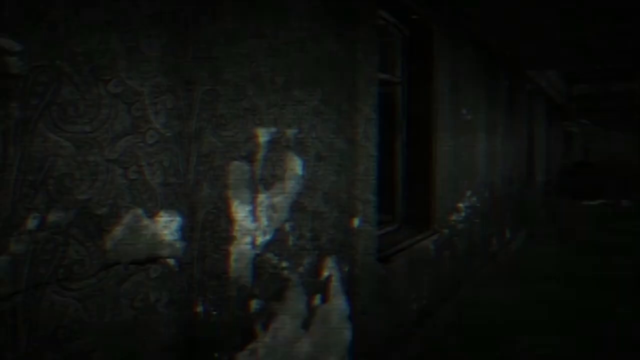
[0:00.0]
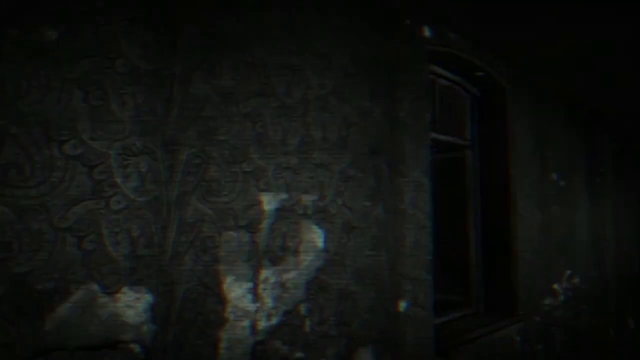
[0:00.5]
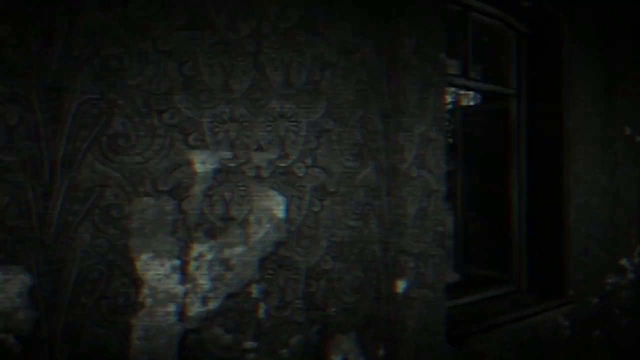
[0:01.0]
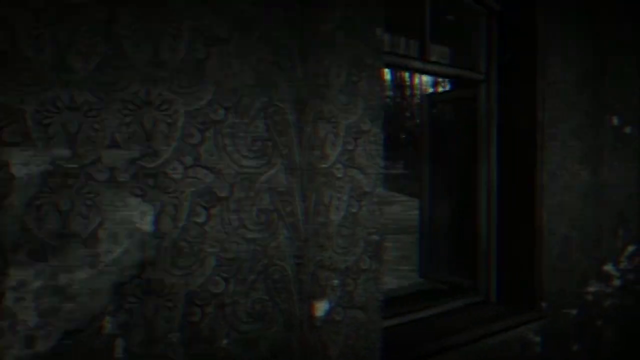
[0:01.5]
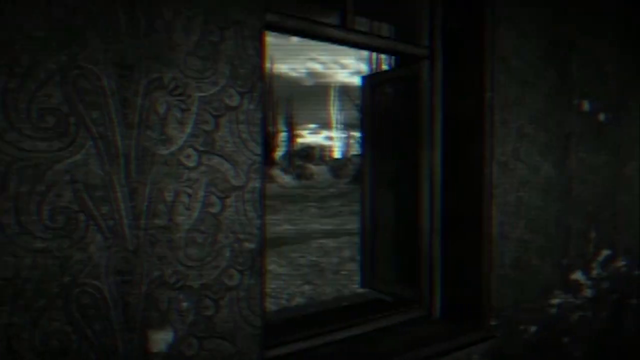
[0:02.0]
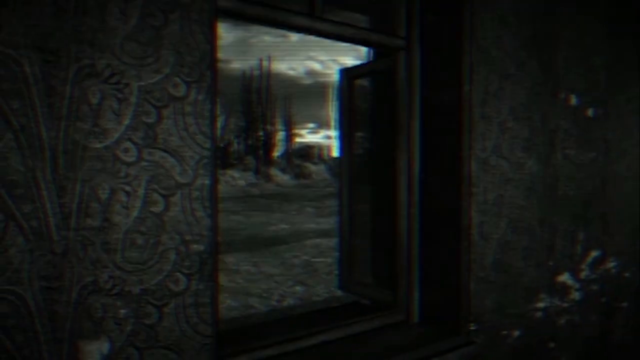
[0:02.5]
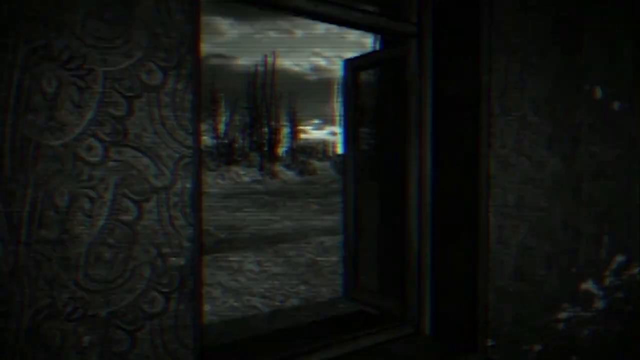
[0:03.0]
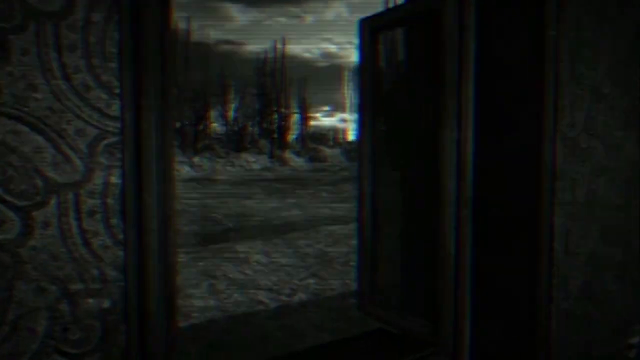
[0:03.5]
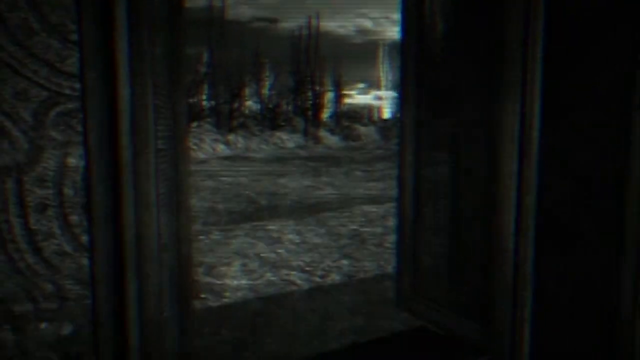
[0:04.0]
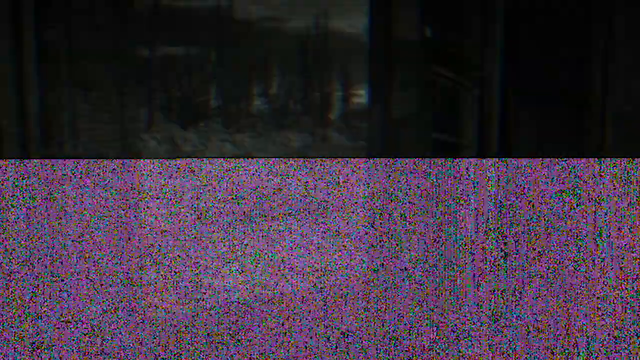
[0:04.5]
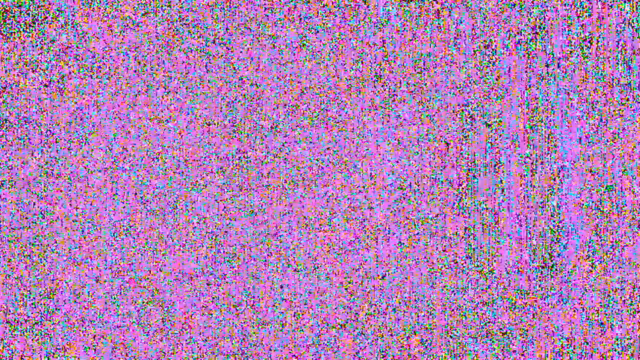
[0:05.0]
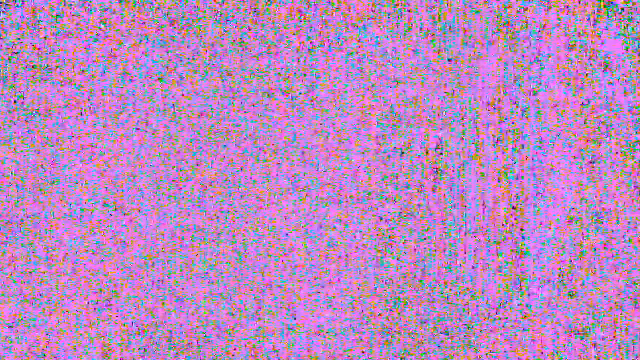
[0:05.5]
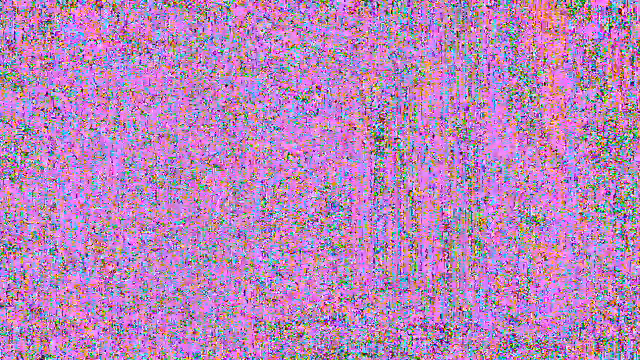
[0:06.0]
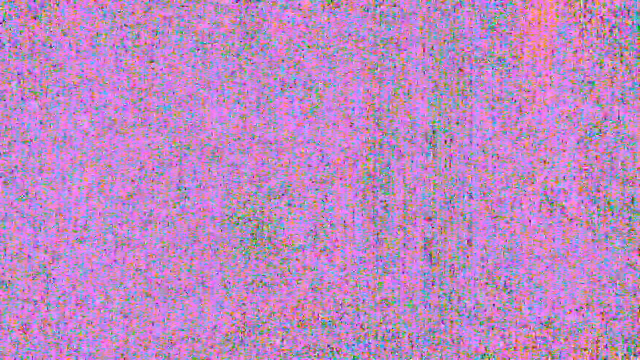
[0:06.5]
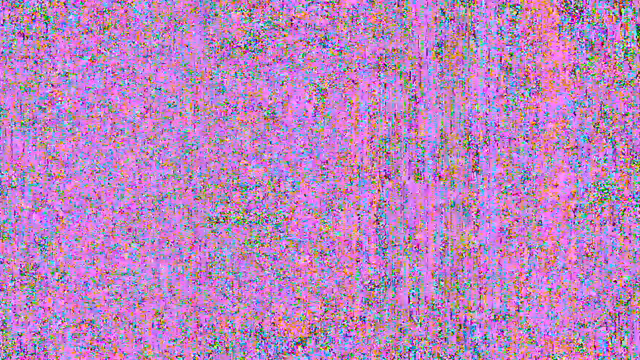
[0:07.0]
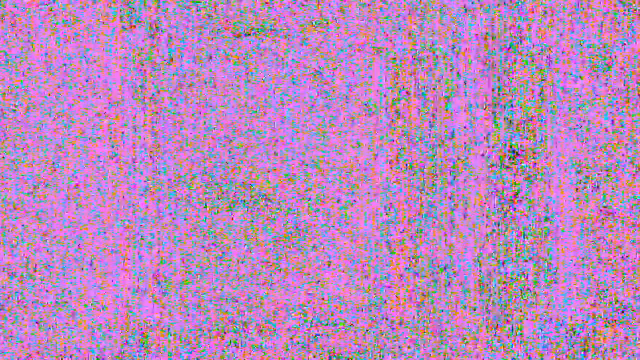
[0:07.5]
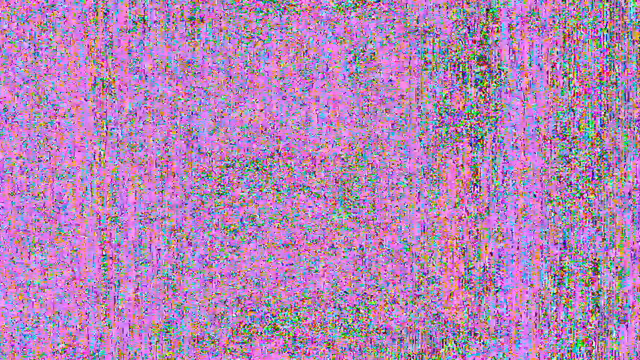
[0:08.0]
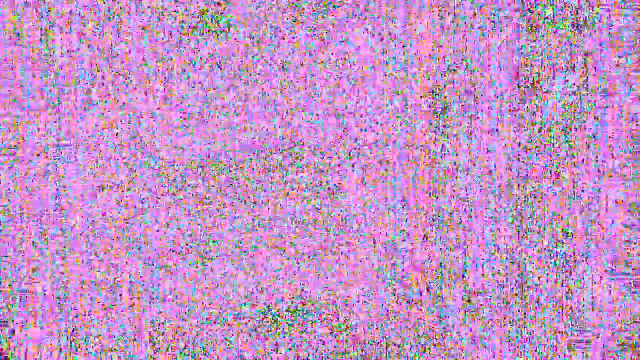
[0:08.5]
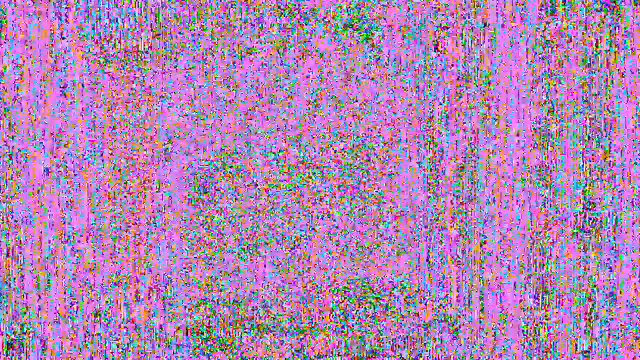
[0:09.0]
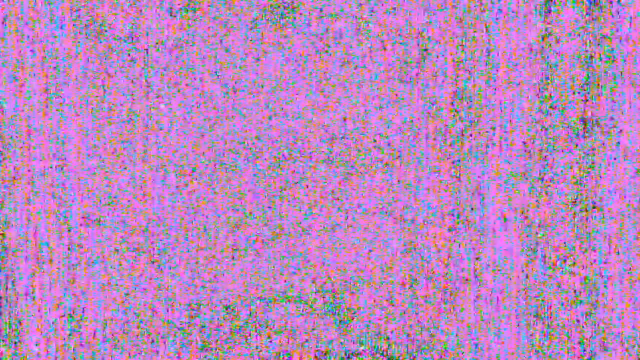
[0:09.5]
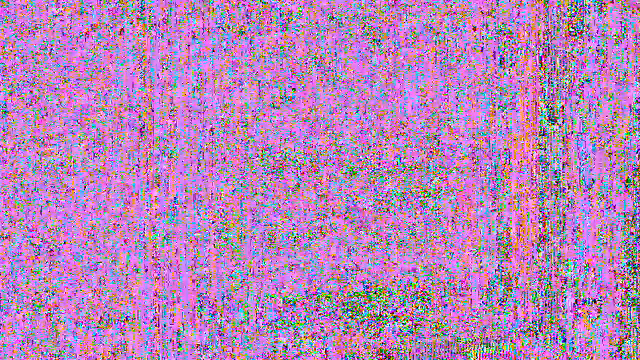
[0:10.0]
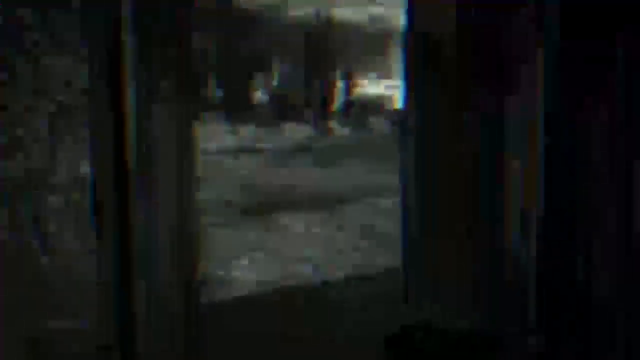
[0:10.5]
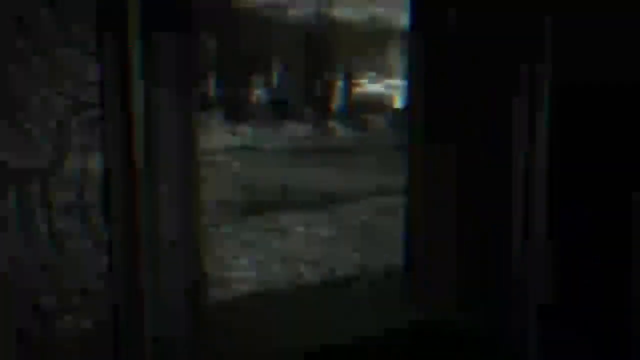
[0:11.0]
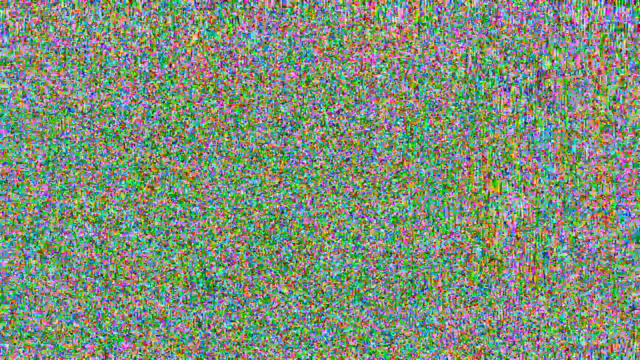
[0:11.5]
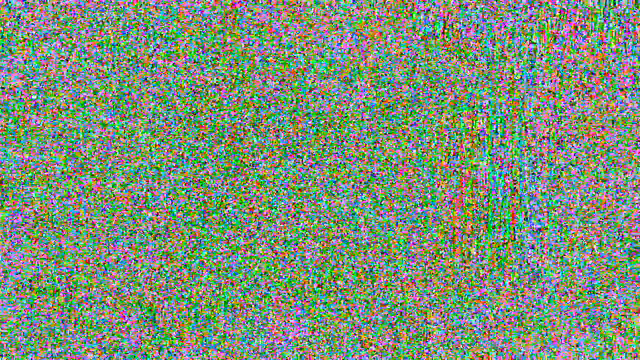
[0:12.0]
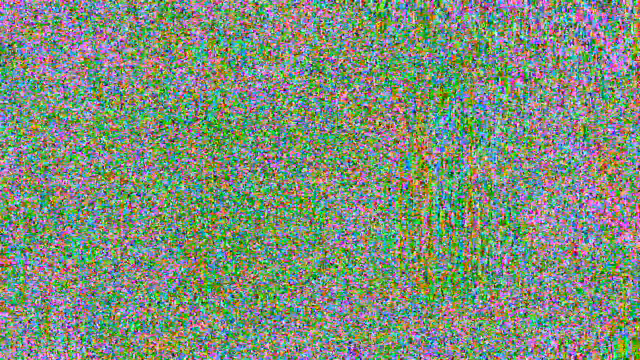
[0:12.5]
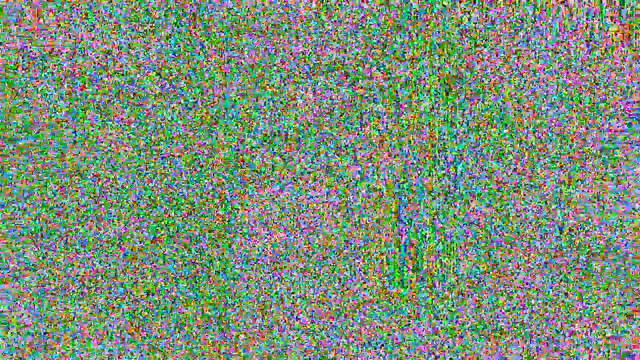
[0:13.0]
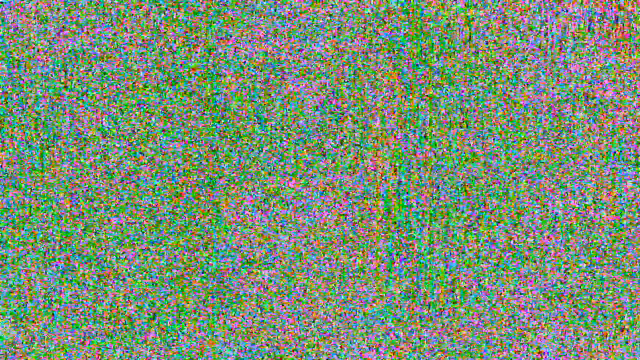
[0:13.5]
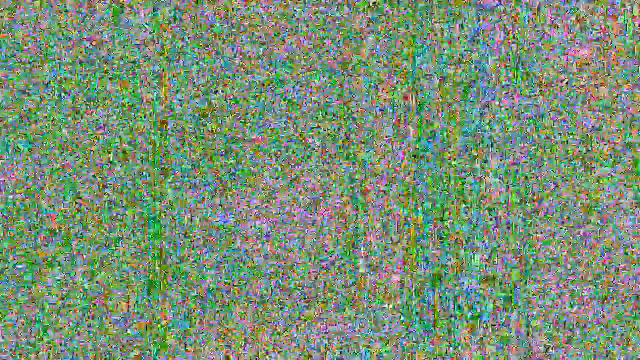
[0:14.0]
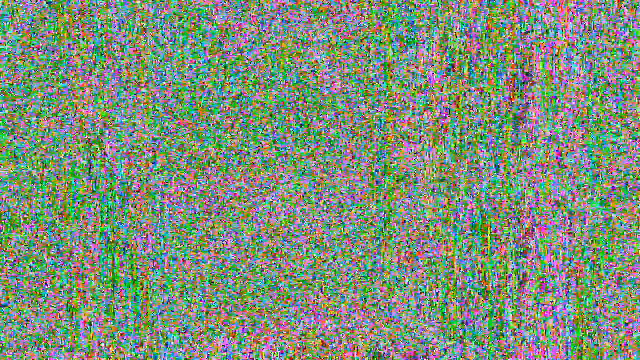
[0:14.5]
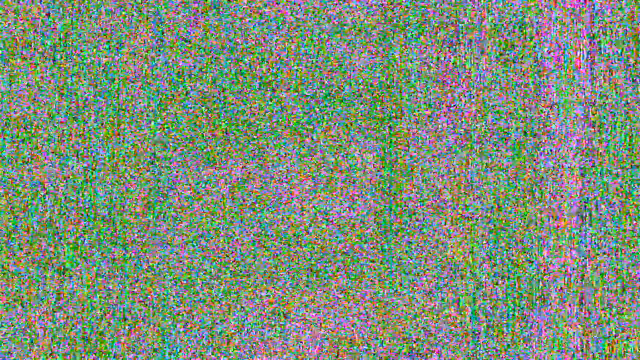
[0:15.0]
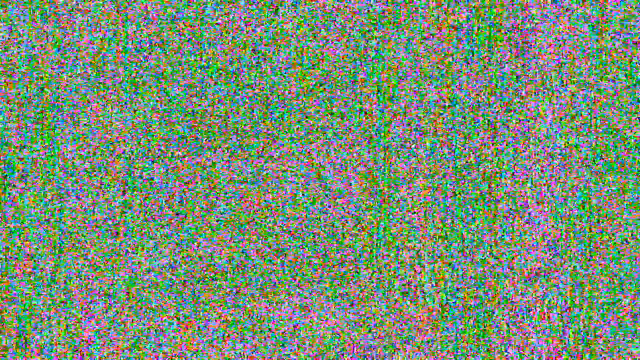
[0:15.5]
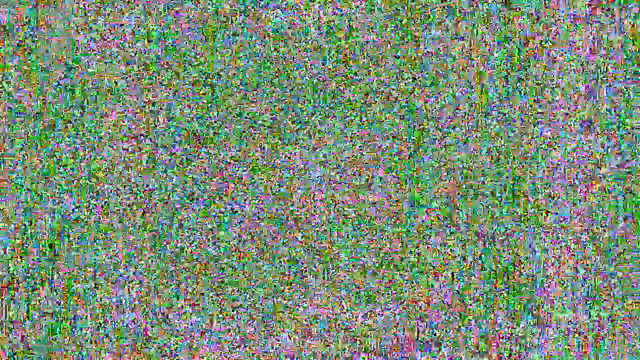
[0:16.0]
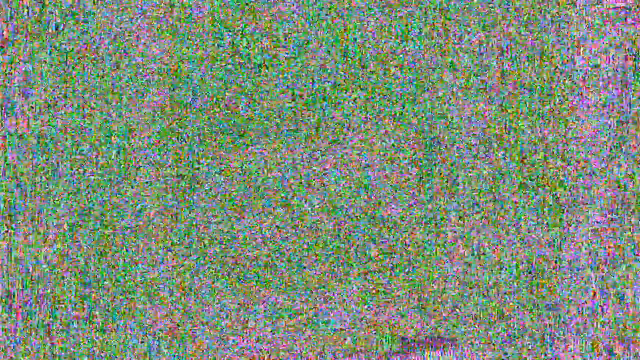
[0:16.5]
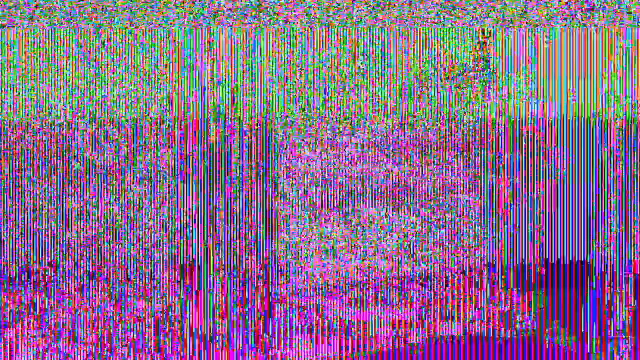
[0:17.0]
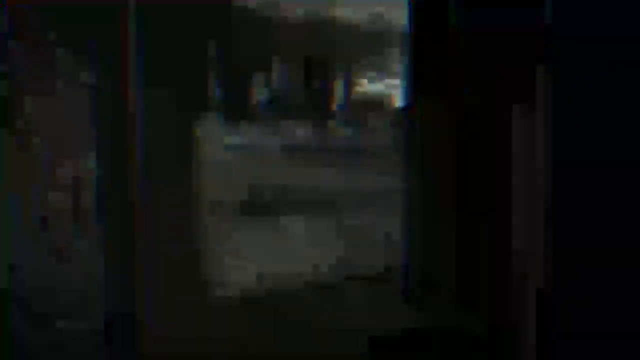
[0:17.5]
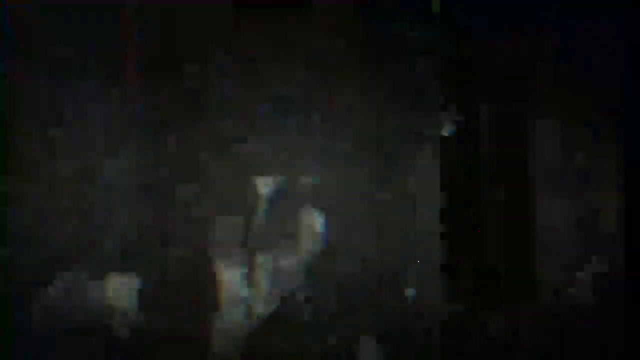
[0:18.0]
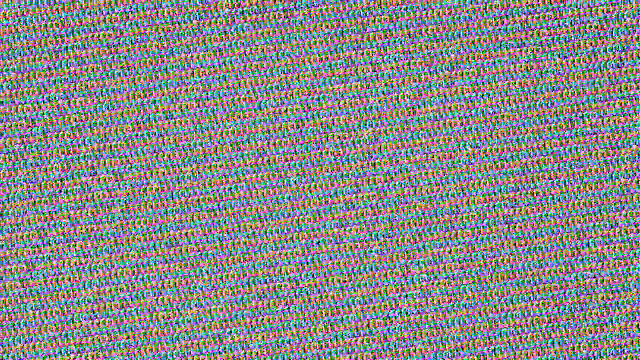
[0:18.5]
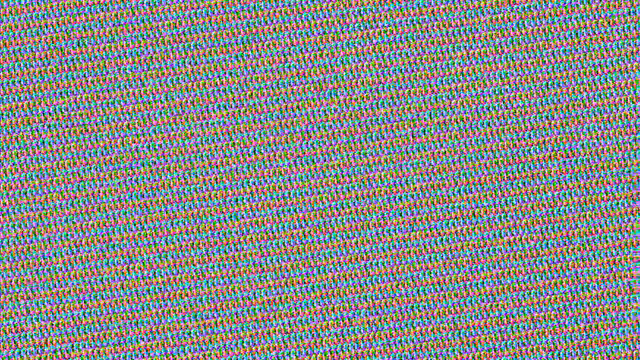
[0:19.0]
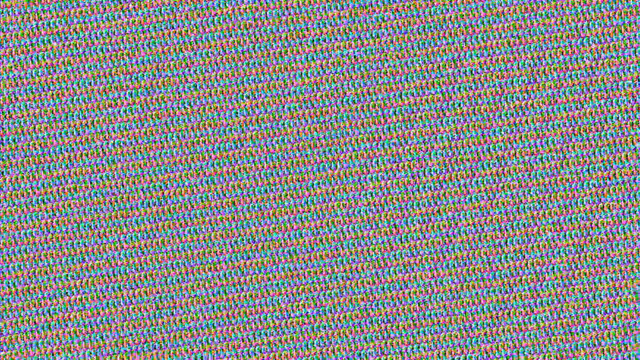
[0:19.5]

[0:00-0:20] The footage looks like something from sort of a horror movie or a home movie. Somebody moves through what looks like a house, with what looks like patterned wallpaper on the walls. The whole image is either black and white or sepia, or has had kind of colouring effects added to it. As the camera moves, what looks like the outside comes into view: the sky and what looks like trees and fields, though the colouring makes it slightly difficult to work out what is shown. The picture then changes to static interference like that seen on TVs before they were digitised. It turns a very pink colour with the static moving around on it, then jumps back to a shot of the camera pointing outside the window of the house. It then changes to a green-based static before going back to a short shot of someone using the camera to look outside, then to more static, and then back to the footage of someone looking outside the window of their house. The footage is quite disjointed and it is not clear what is going on.